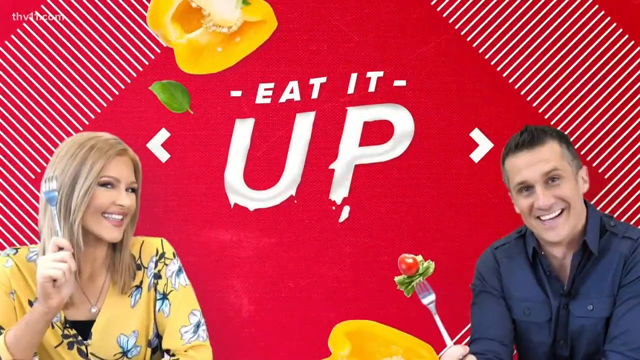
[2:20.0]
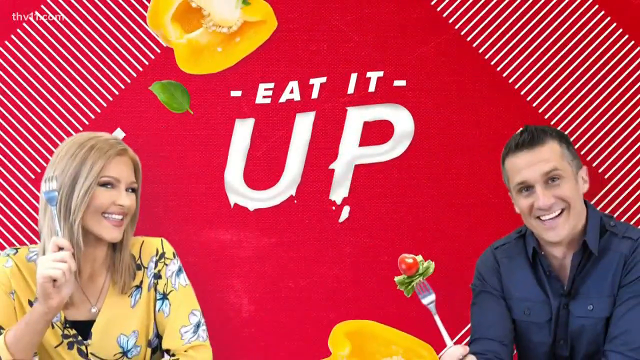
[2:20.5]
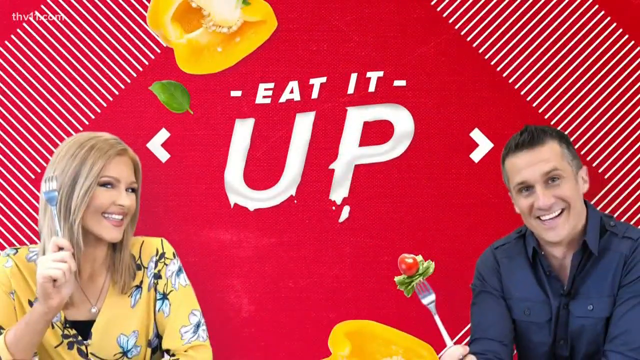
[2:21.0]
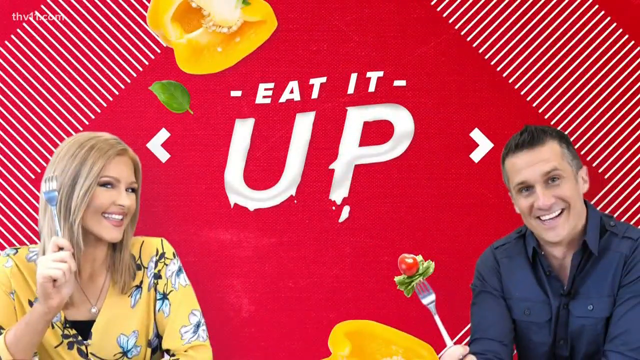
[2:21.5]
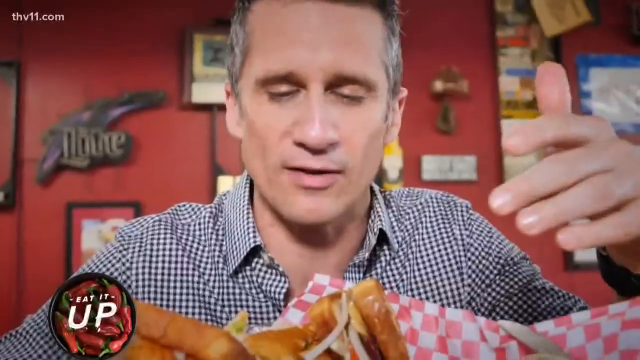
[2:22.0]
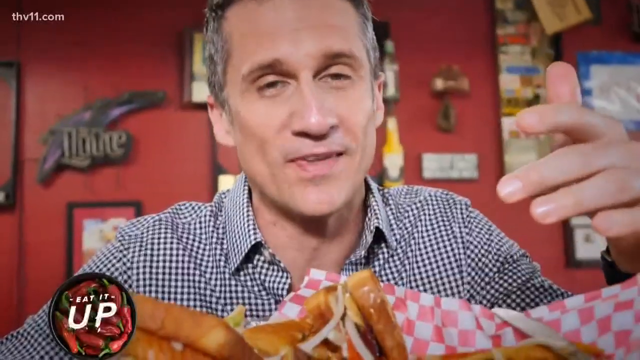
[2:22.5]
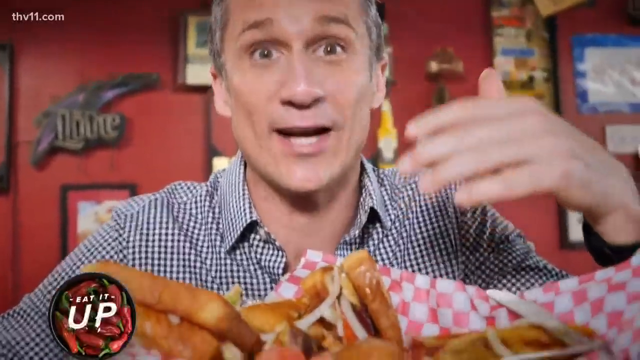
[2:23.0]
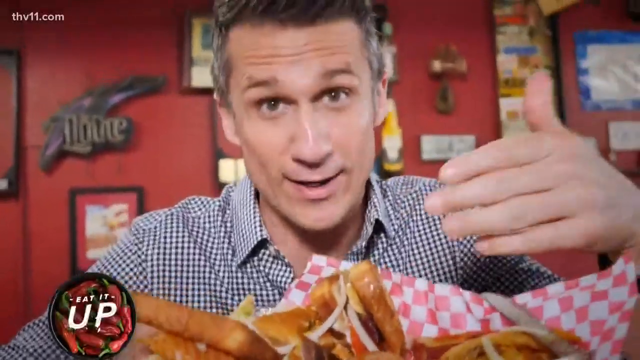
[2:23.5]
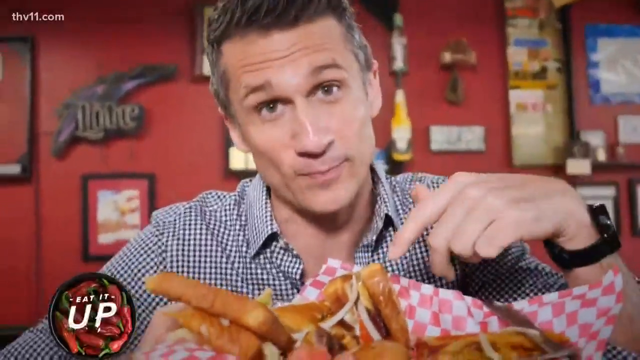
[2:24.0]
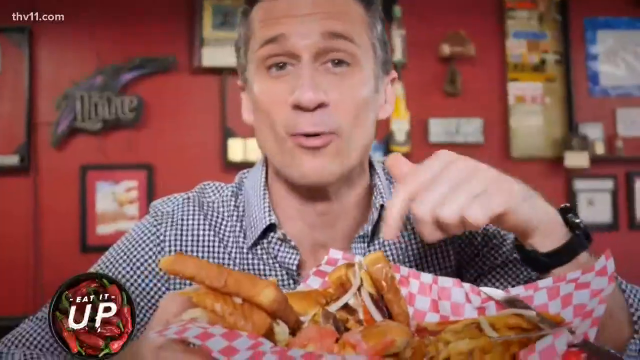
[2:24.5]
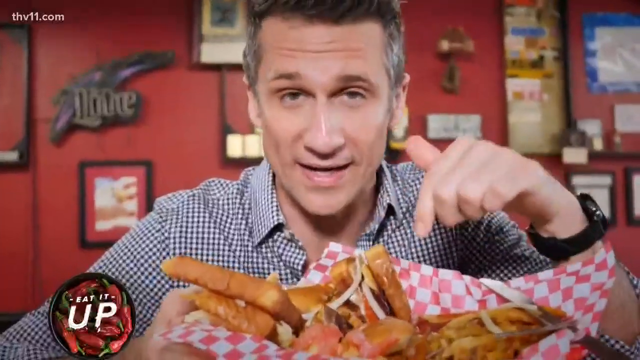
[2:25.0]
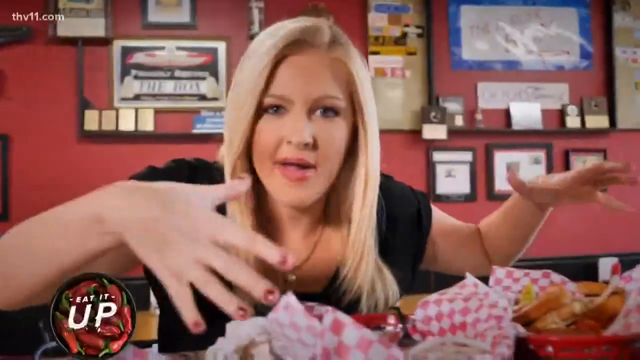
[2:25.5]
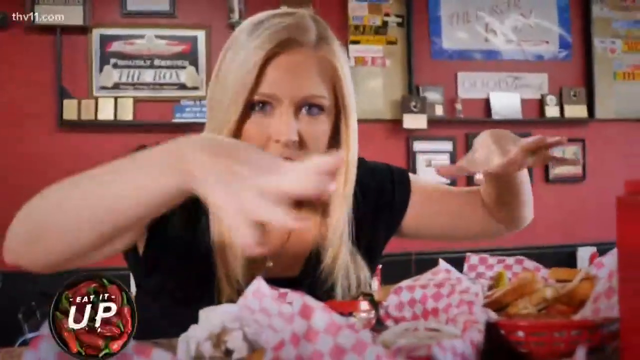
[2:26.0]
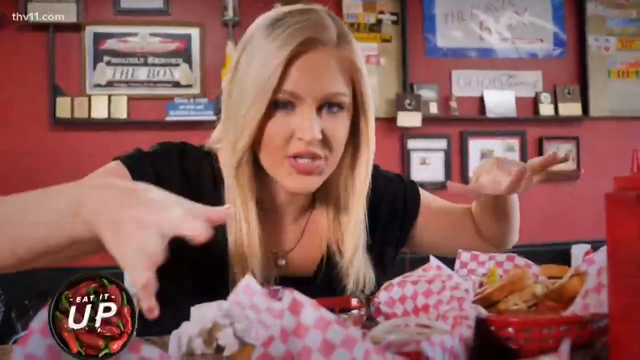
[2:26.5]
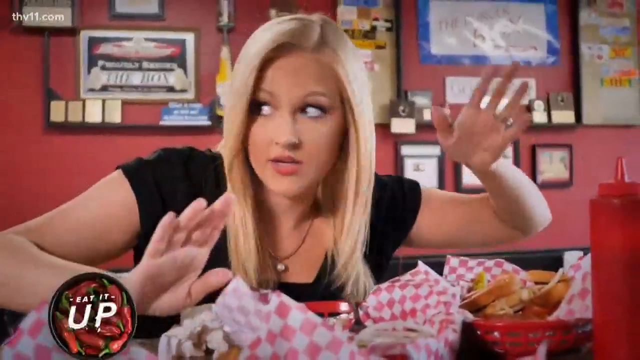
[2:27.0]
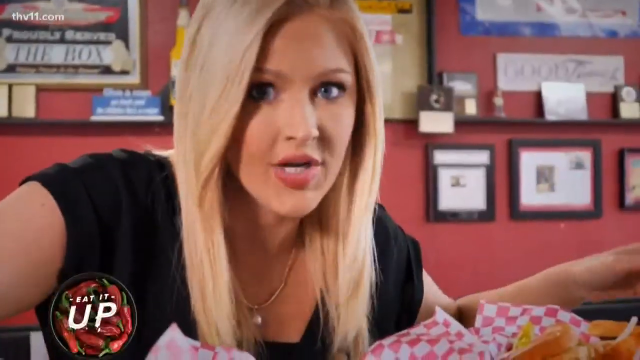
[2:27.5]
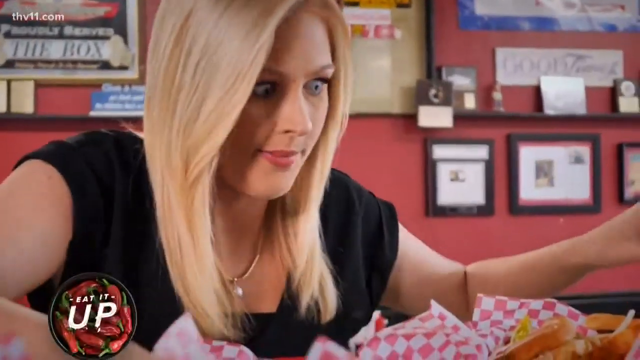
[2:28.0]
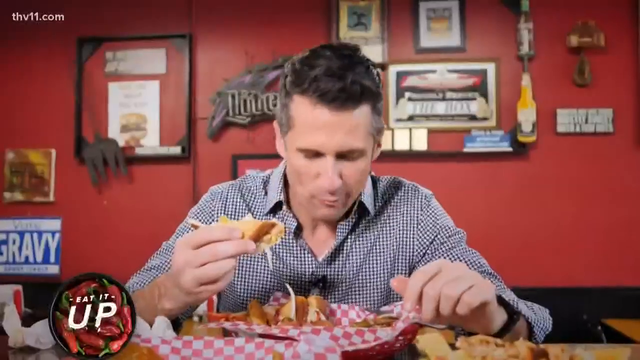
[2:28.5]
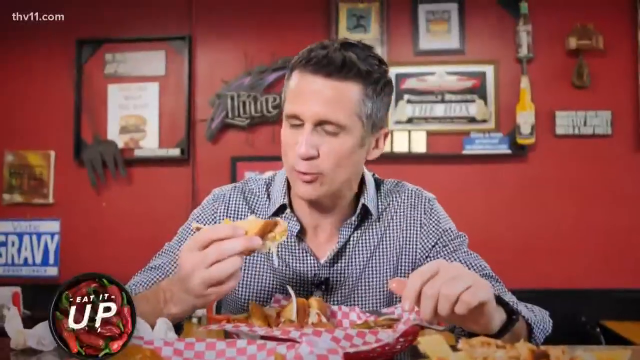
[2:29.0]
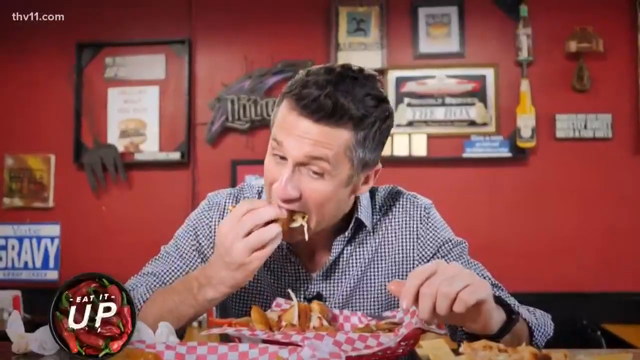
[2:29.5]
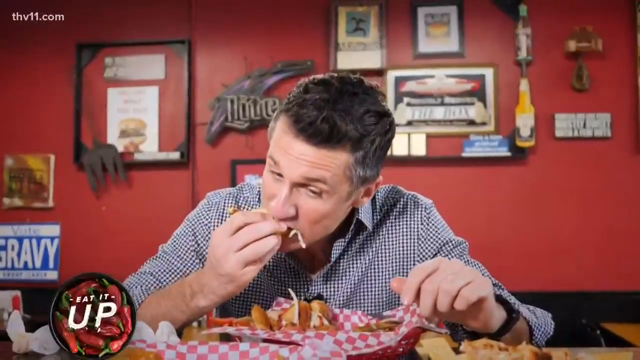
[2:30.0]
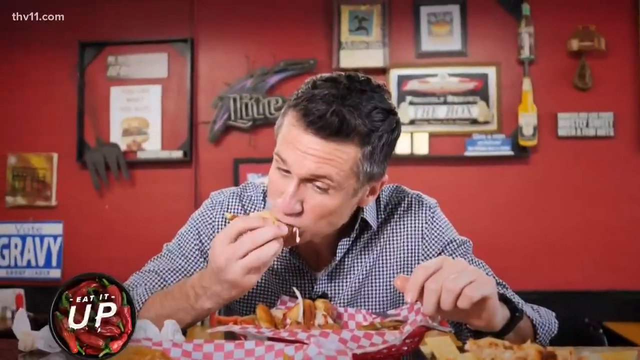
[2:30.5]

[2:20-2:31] The YouTubers eat in the restaurant. The camera zooms in on Rob, who wears a T-shirt and has short black hair and looks like he is taking a bite, and on Amanda, who has long blonde hair and wears a black top and black jeans as she eats. Their facial expressions show they are enjoying the food, and they look happy. The camera zooms in closely on their faces, hiding the background.